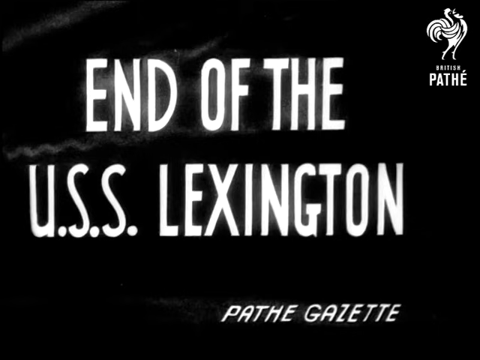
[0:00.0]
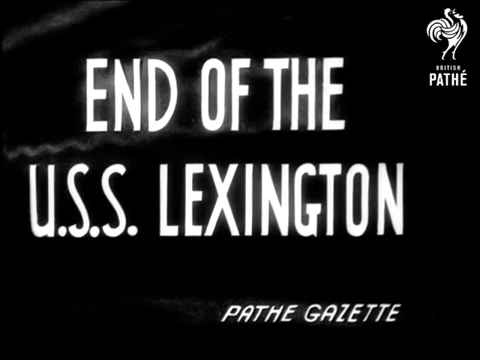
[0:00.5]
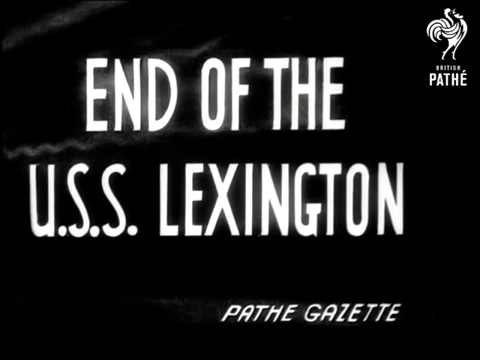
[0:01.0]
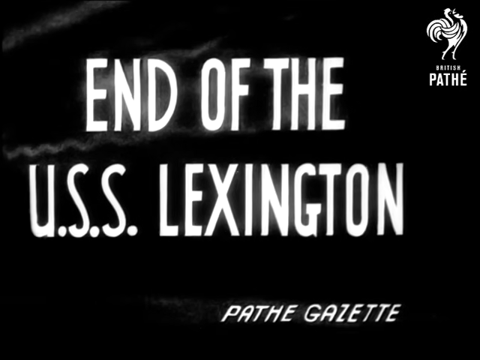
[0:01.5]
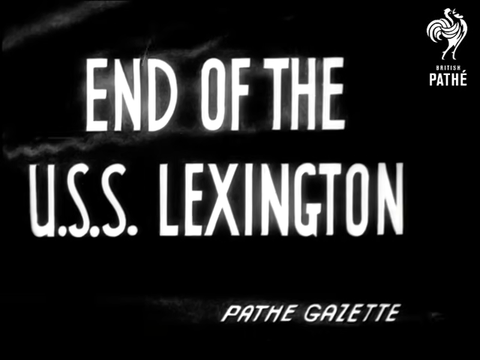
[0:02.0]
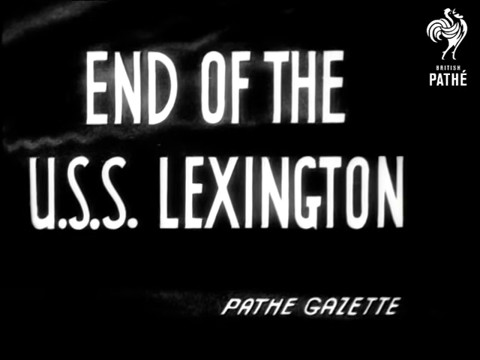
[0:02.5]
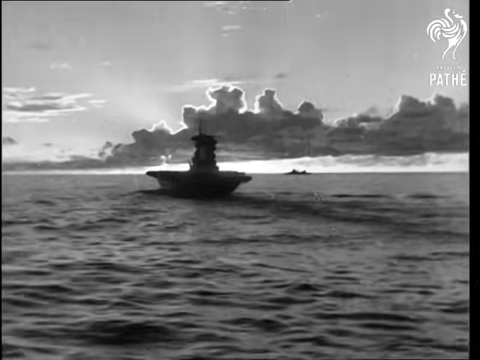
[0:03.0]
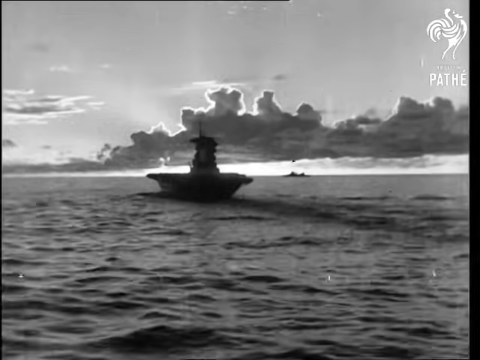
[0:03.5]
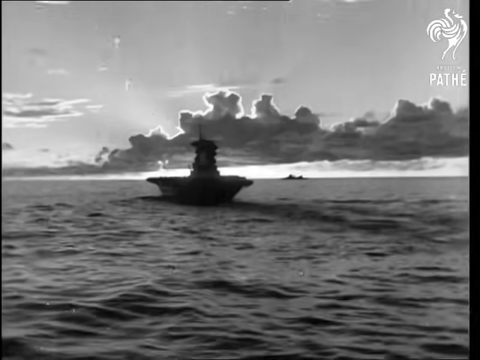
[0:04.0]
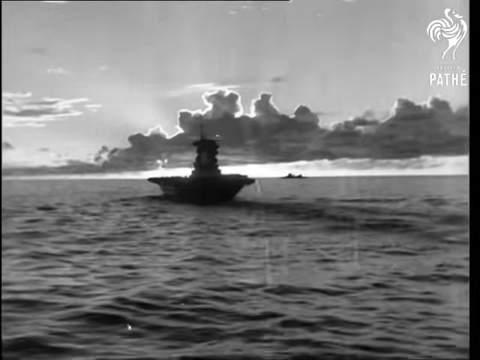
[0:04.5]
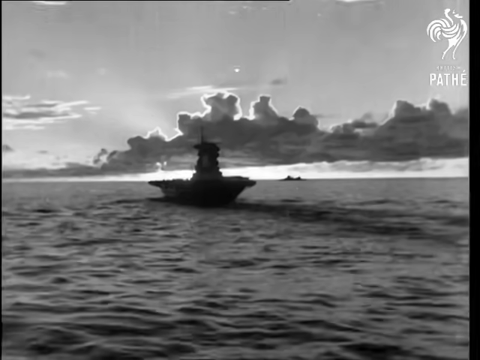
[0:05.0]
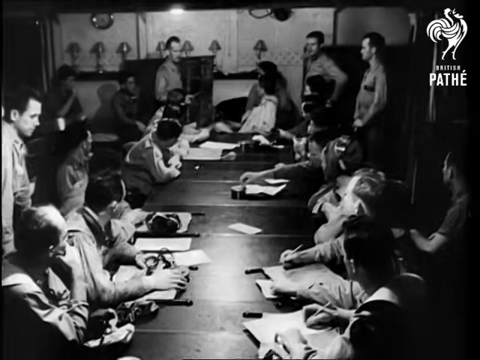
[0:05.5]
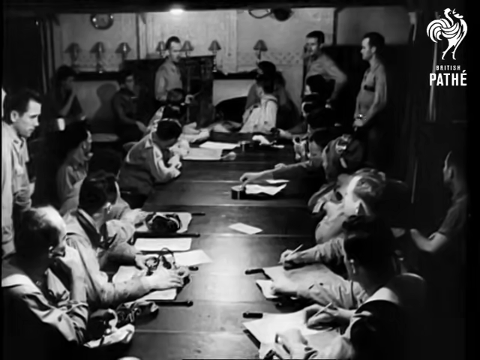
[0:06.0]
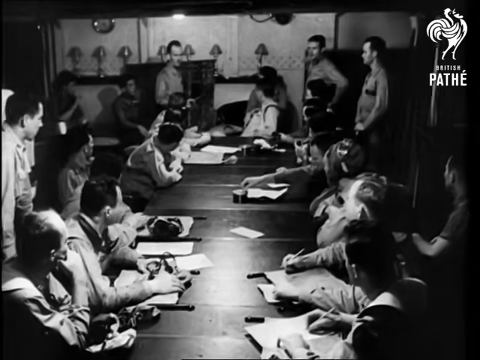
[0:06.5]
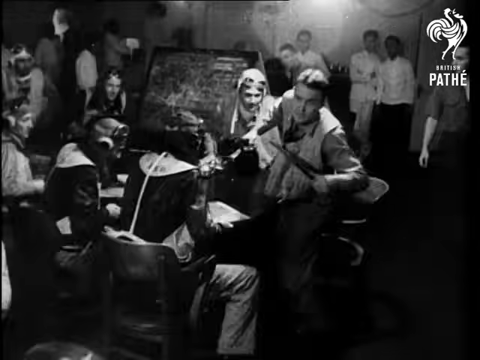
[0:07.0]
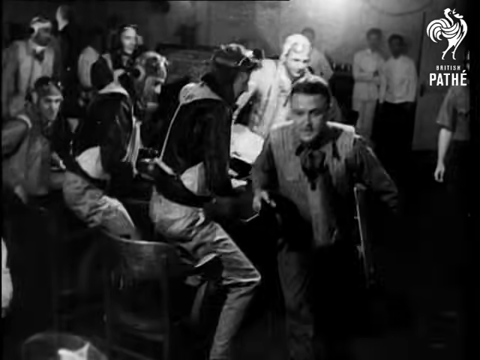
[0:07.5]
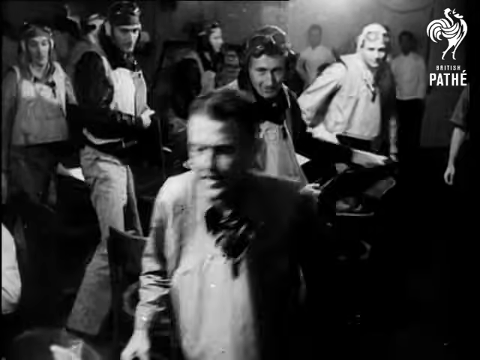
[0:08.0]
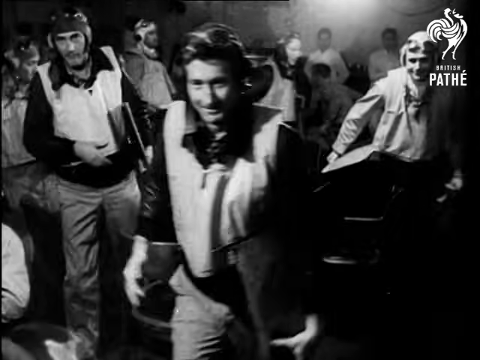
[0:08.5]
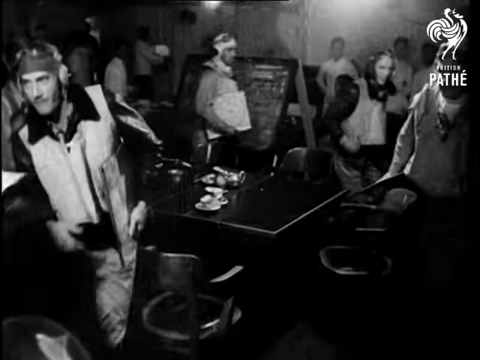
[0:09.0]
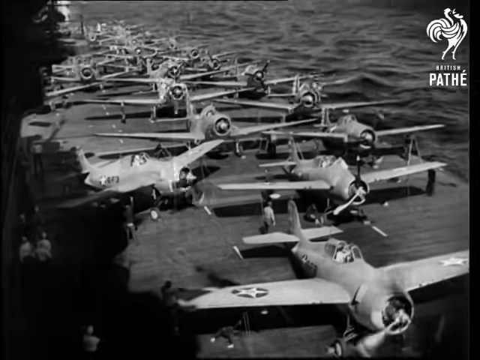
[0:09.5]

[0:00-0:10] The video opens on an intro screen with a black background and white text reading "end of the USS Lexington." At the top right is a logo that looks like a rooster, with "Pathé" underneath it, and below that, at the bottom right, white text reads "Pathé Gazette." The video then appears to transition to a black-and-white scene of what looks like a carrier on an ocean, apparently heading toward the camera, with rippling water and clouds in the background and sky. Next, a black-and-white scene shows a long table with many men all around it, apparently all looking forward and to the left toward the front of the table. In the following scene all the men start getting up; the men around the table appear to be wearing pilot's hats and goggles, and they stand up and start walking toward the bottom left. A scene on top of the carrier then shows what looks like many airplanes, around 20, with propellers in front, facing toward the camera and the bottom right. All the propellers start to wind up and spin.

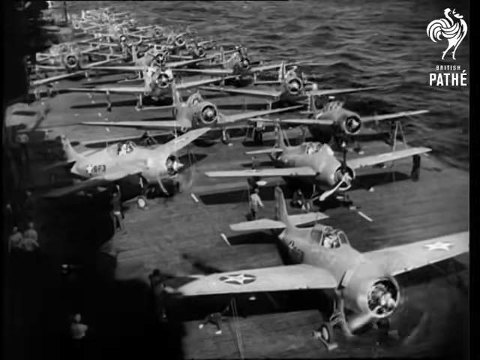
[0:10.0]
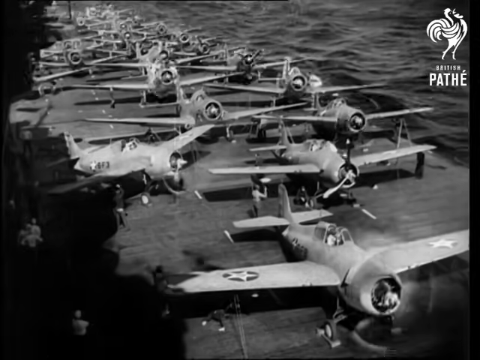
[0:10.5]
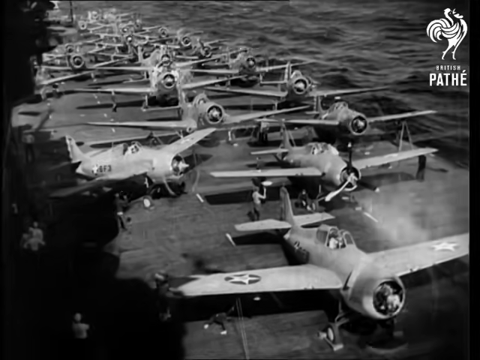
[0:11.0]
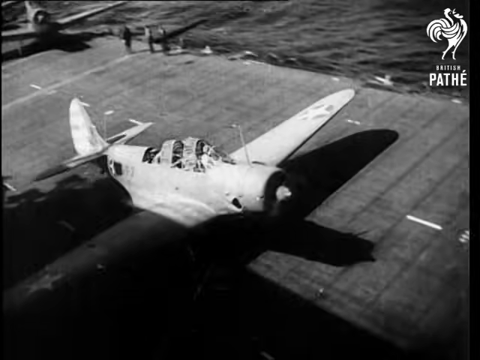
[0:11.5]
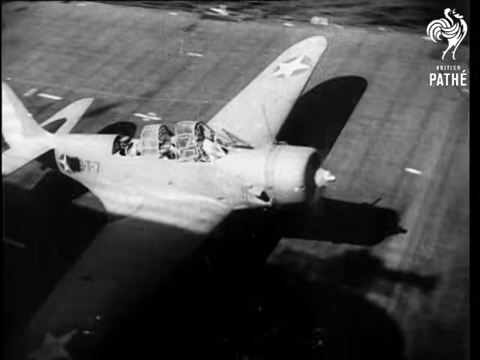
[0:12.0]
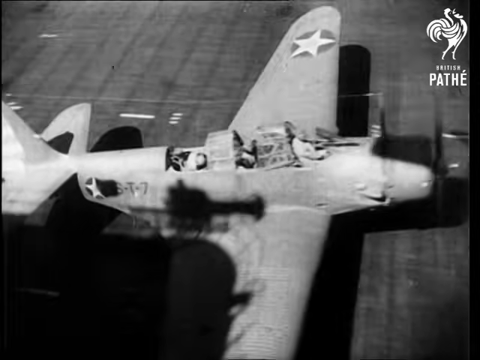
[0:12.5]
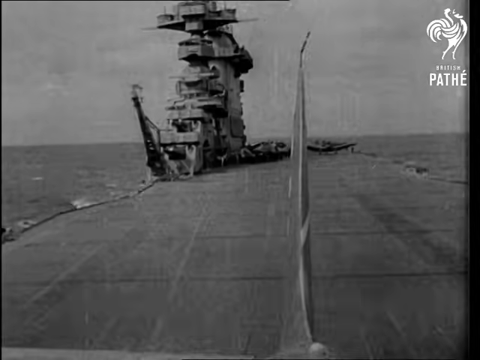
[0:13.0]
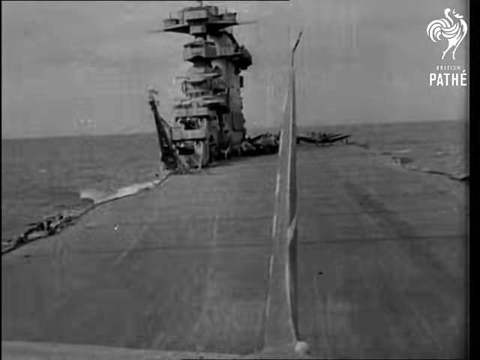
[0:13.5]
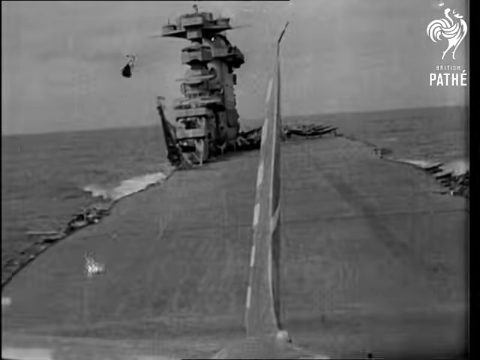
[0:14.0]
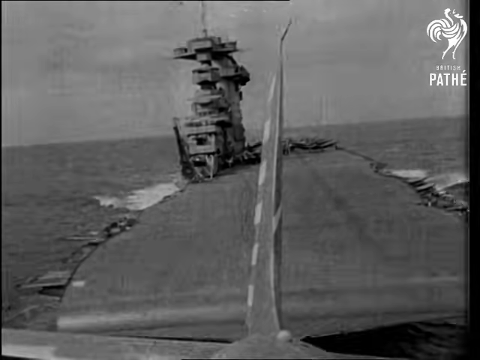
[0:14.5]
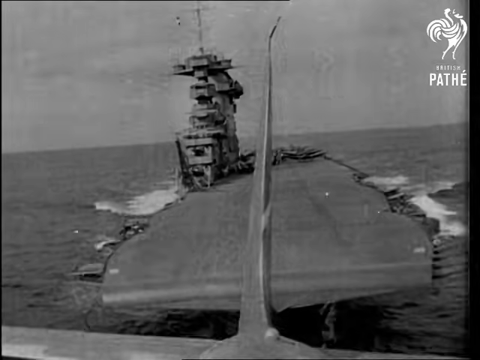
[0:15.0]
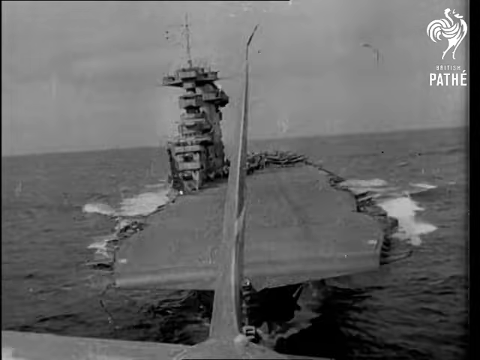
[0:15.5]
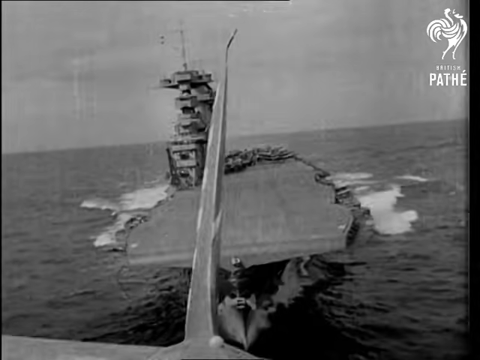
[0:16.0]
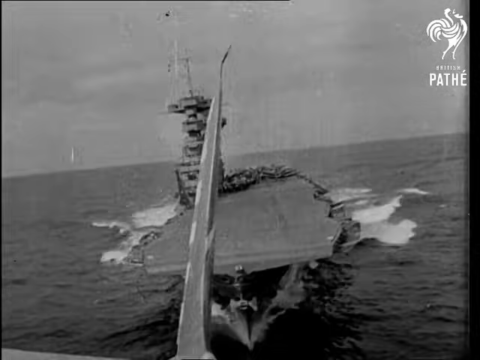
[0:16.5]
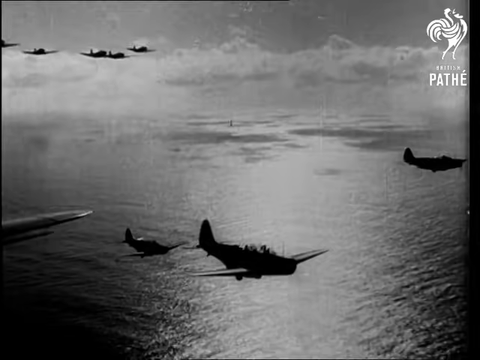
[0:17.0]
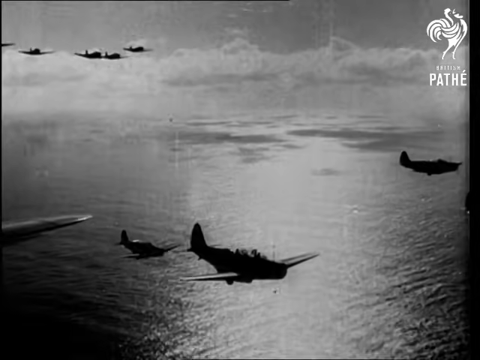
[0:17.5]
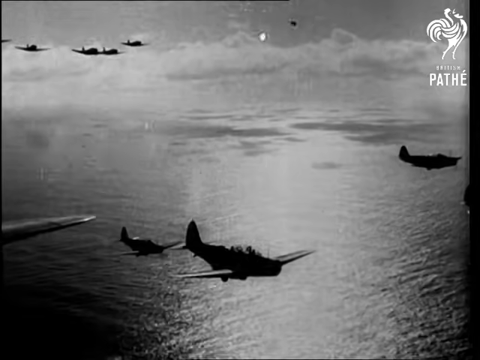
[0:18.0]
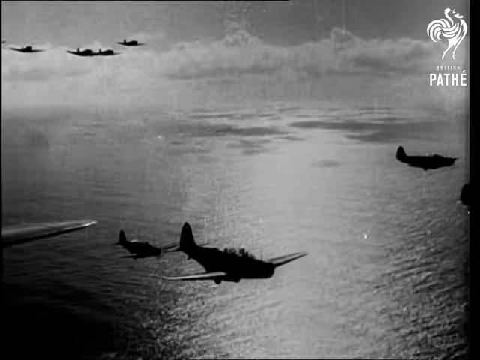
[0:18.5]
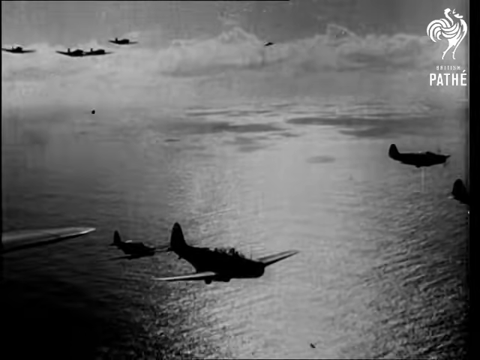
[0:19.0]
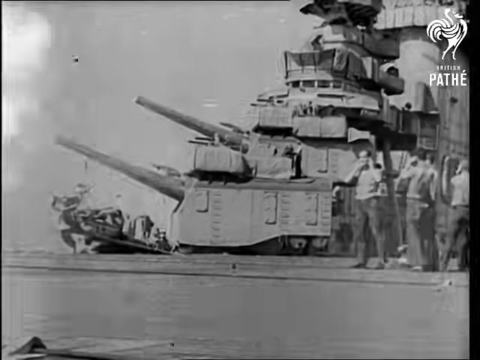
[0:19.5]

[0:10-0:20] The view appears to be on top of an aircraft carrier, with rippling water visible at the top right. On the carrier there seems to be a runway with around 20 airplanes lined up near each other, all facing toward the camera and slightly toward the bottom right, seen from a downward angle. The propellers start to rev up and appear to be spinning. The view then changes to what looks like the carrier's runway, where an airplane takes off from the left side to the right side; it appears to be an airplane with a propeller in front, possibly a 1940s or 1950s airplane. The view then looks backward at the tail of the airplane as it leaves the carrier, showing the liftoff as the carrier gets further and further away, with water around the carrier. An aerial view follows, showing airplanes flying from left to right as silhouettes against the sky, four in the background and around four in the foreground. Another scene apparently shows the cannons on battleships pointing to the left and all firing: two cannons are visible, one at the bottom and one at the top, with a radar tower in the background and some people on the right side. Smoke comes out as the cannons fire to the left.